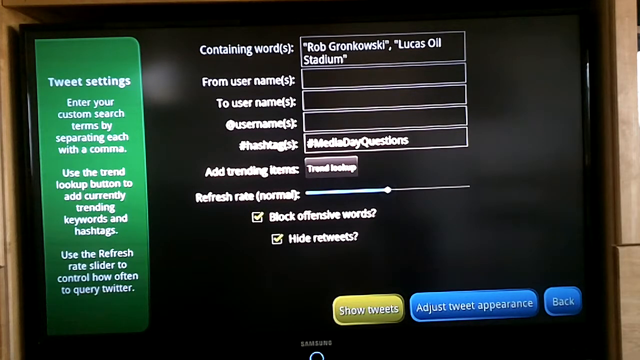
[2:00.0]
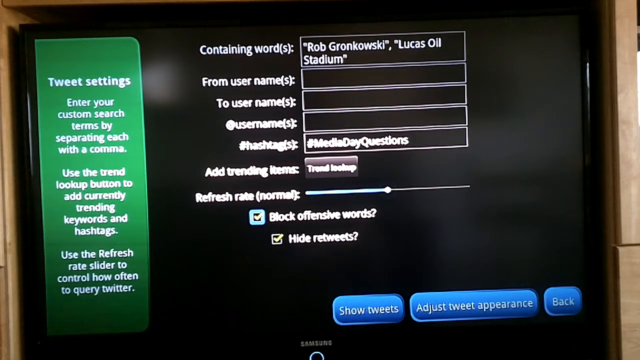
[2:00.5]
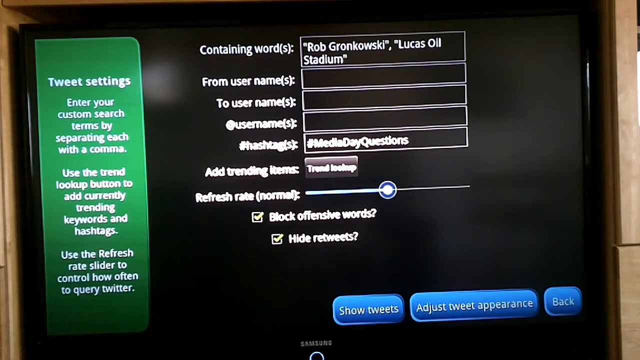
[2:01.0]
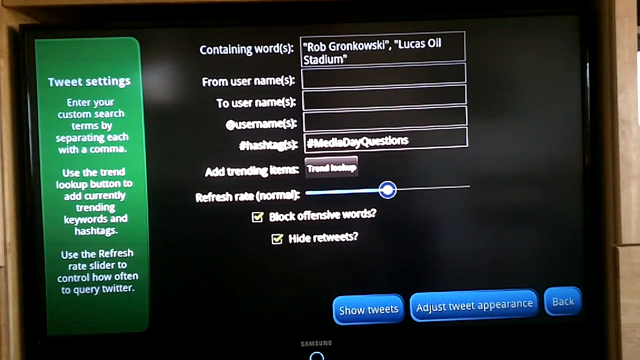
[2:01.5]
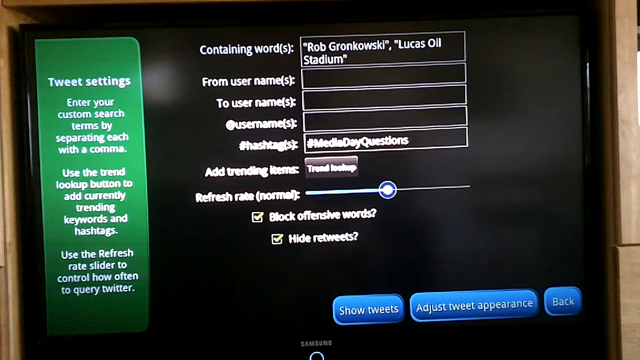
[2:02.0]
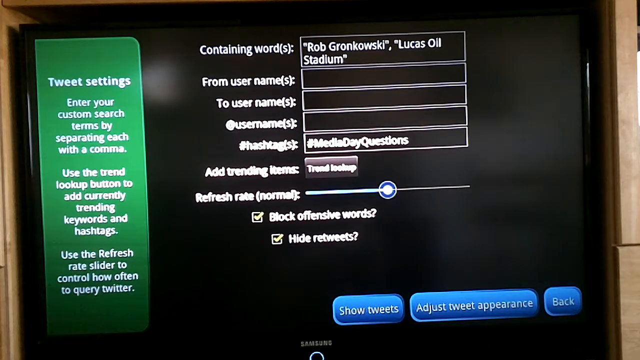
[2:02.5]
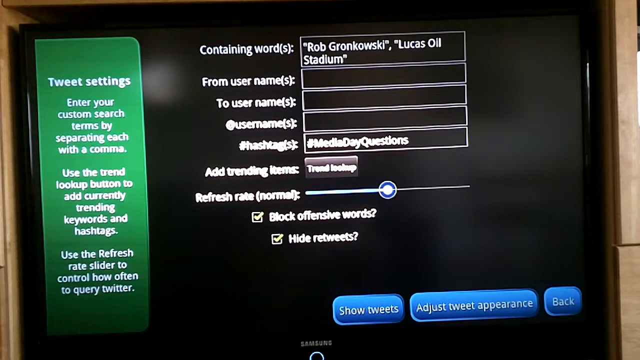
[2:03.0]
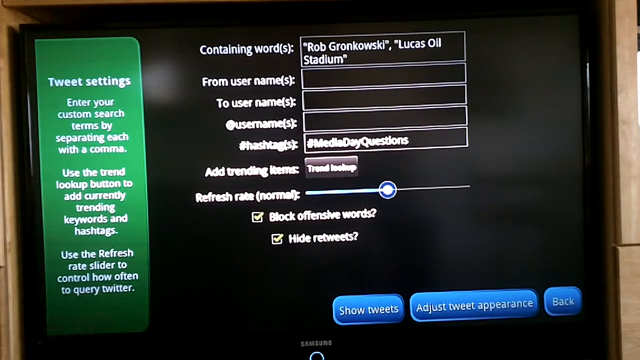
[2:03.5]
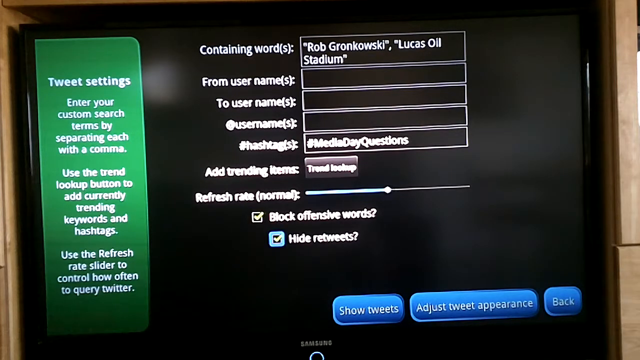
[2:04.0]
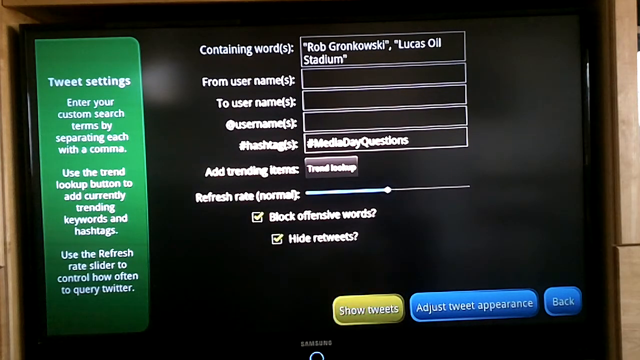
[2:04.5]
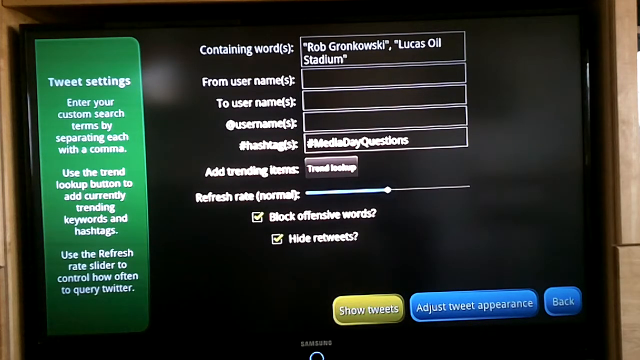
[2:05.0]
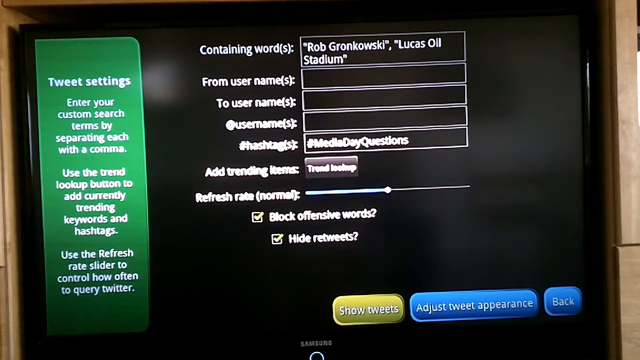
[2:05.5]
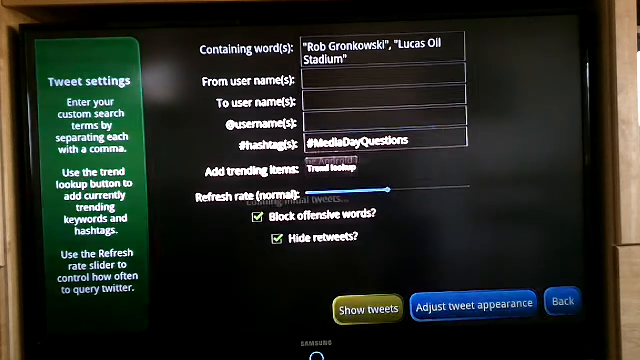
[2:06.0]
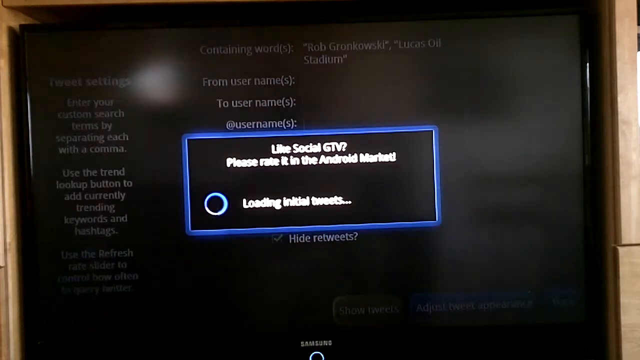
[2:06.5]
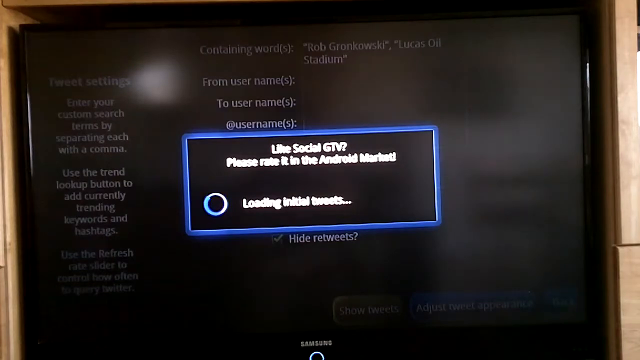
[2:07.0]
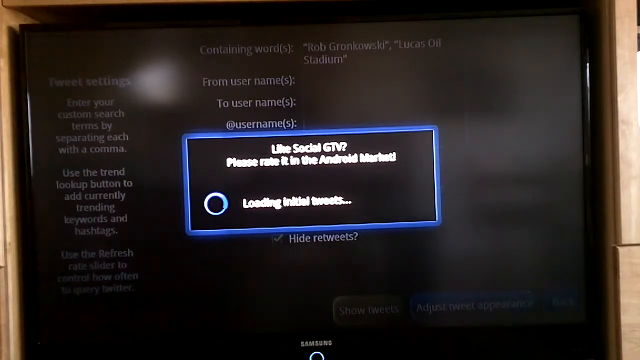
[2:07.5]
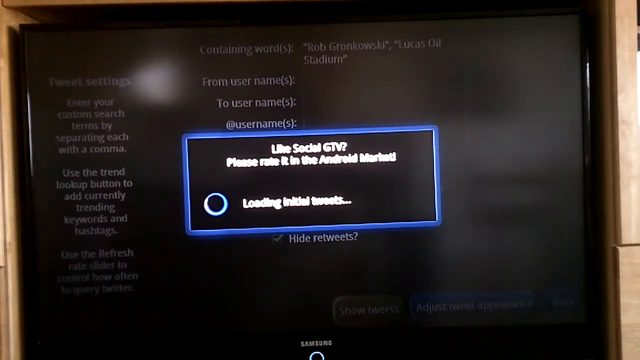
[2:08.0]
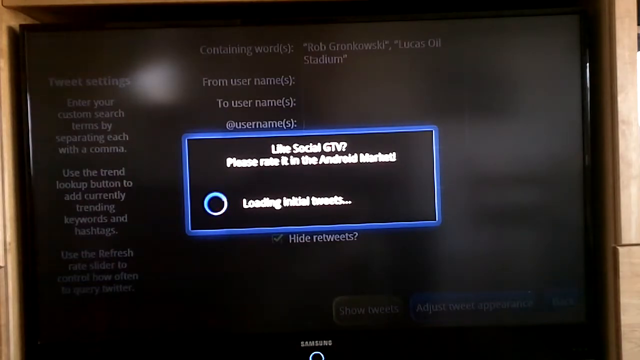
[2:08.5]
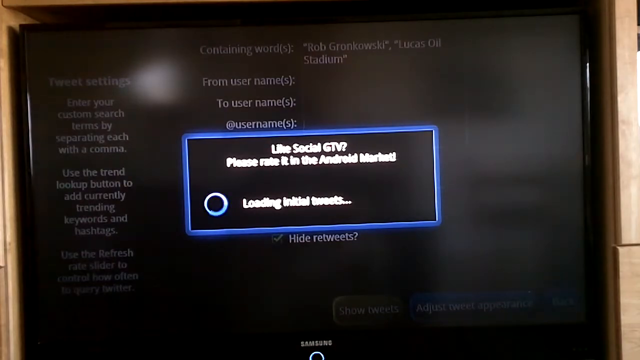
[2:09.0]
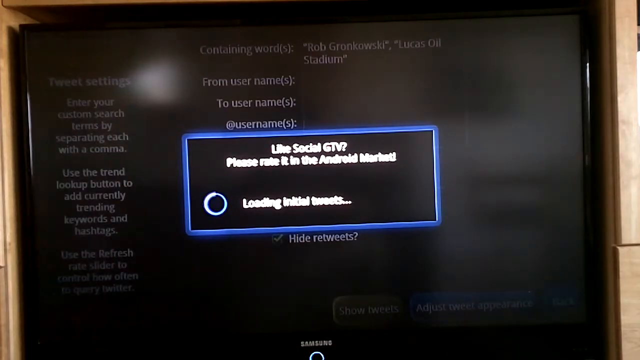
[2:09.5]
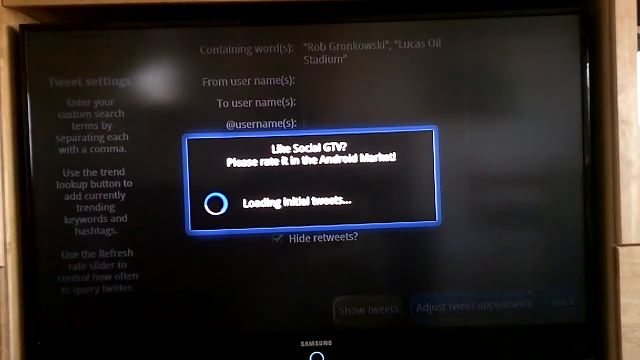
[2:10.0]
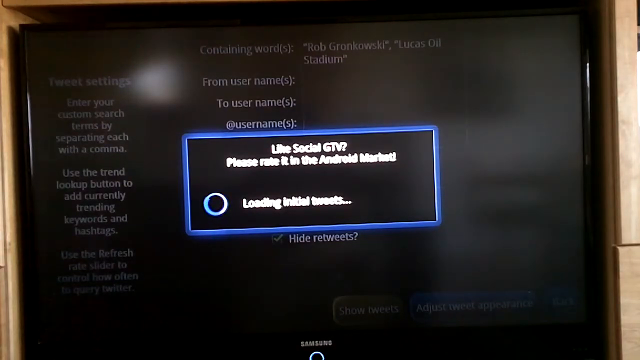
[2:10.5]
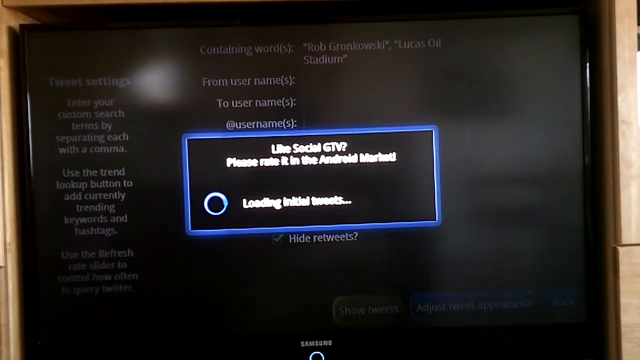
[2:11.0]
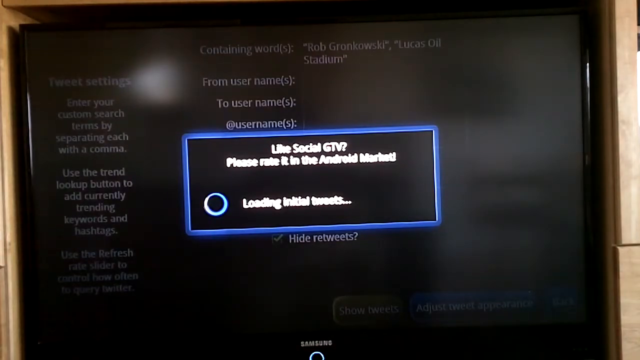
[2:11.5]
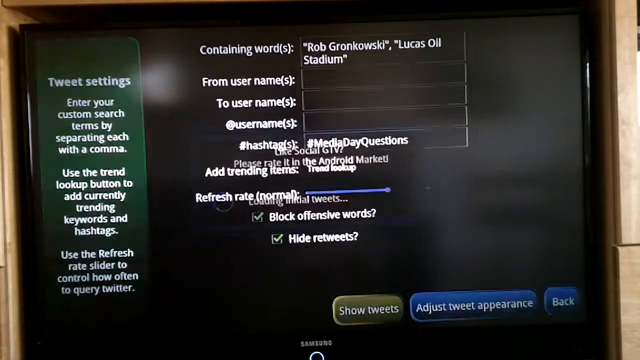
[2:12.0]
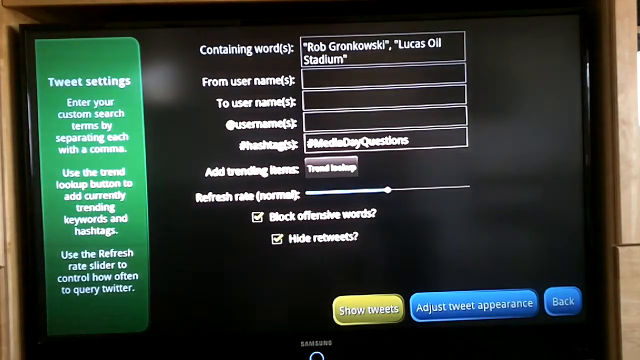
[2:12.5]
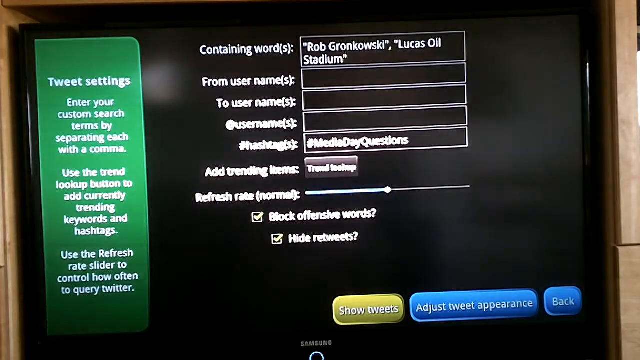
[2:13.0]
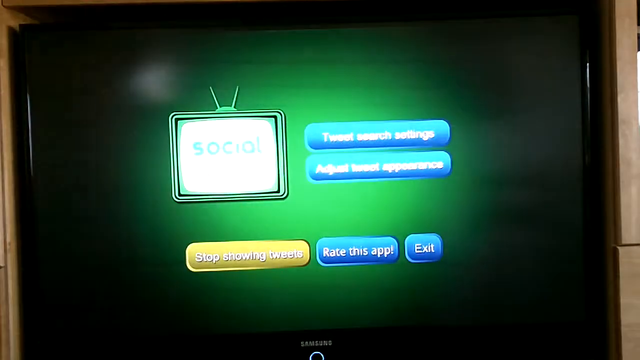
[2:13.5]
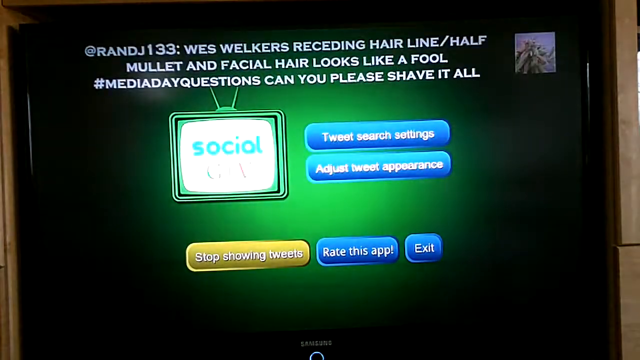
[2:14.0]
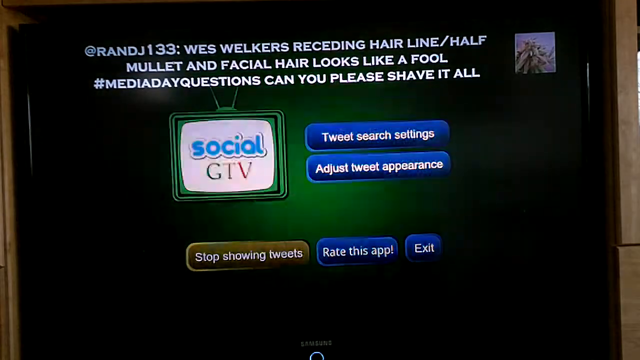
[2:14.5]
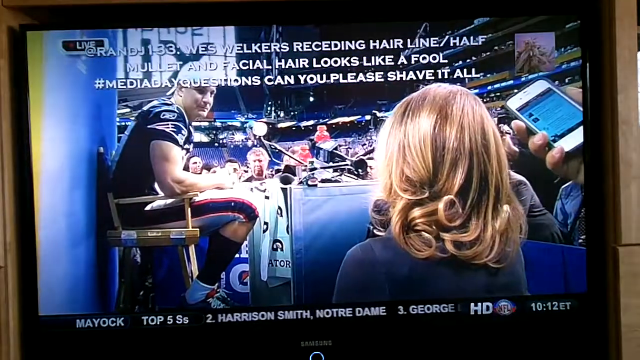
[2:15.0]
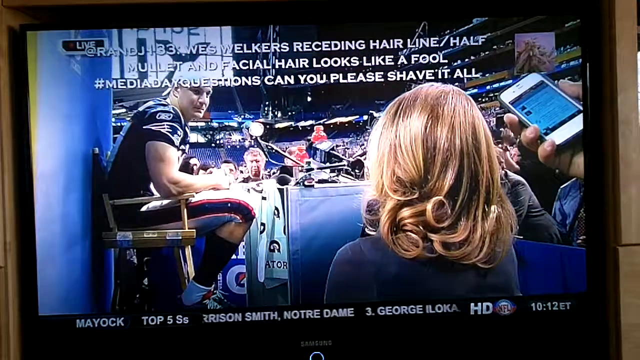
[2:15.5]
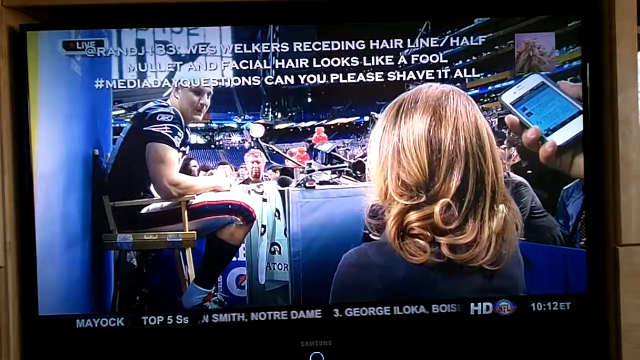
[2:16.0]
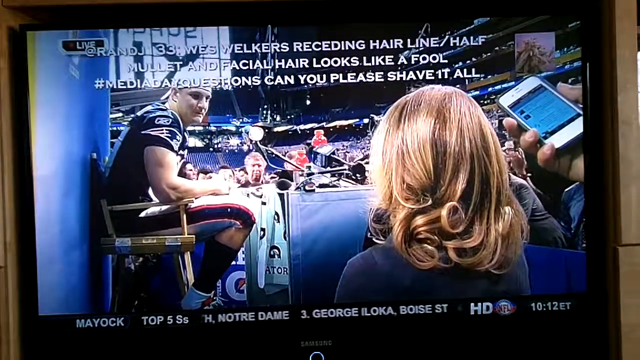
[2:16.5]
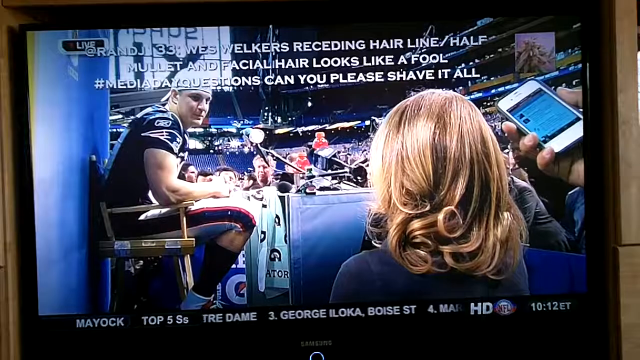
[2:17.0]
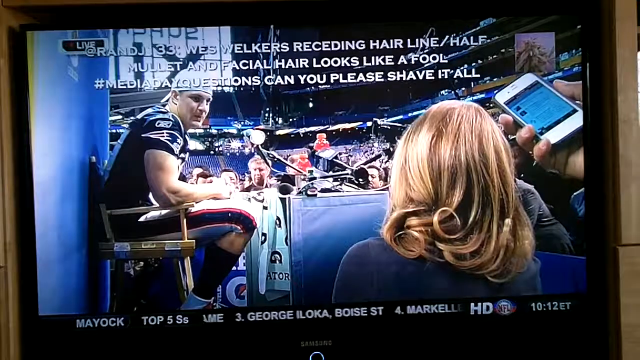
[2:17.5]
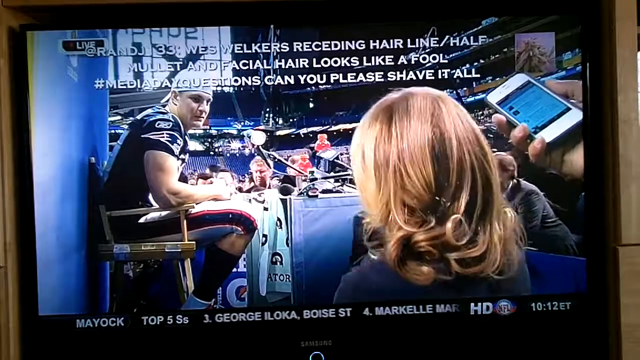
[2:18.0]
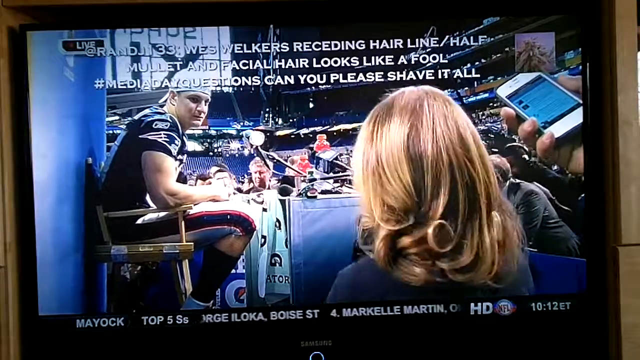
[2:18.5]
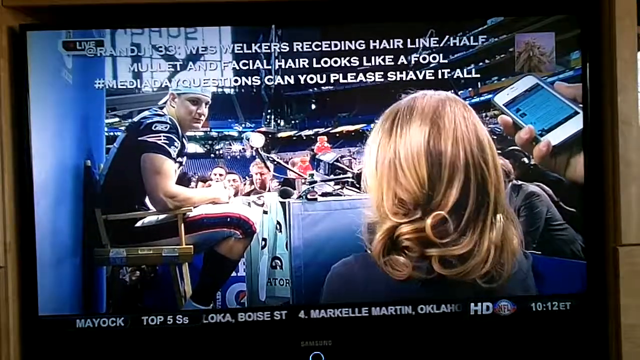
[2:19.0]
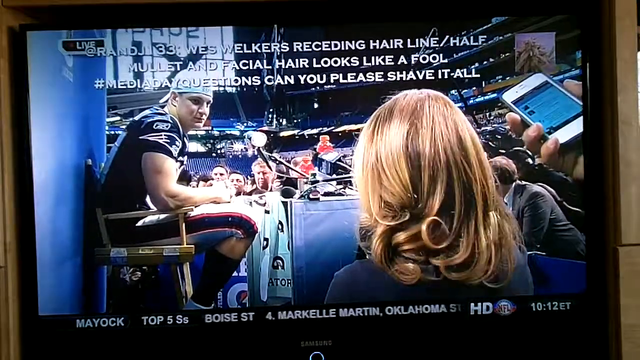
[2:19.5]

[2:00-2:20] A TV screen is being filmed, showing a big menu with a black background. A green banner runs vertically from top to bottom on the left side of the screen, with white text reading "tweet settings. Enter your custom search terms by separating each with a comma. Use the trend lookup button to add currently trending keywords and hashtags. Use the refresh rate slider to control how often to query Twitter." To the right, on a pitch black background, a menu lists several phrases or words with boxes next to them. From top to bottom it says "containing words from usernames to usernames at usernames", "# hashtags", "add trending items", "trend lookup", and "refresh rate normal" with the bar set in the middle; "block offensive words" and "hide retweets" each have a check mark in the box next to them. In the bottom right corner of the screen are three buttons that say "show tweets", "adjust tweet appearance" and "back".